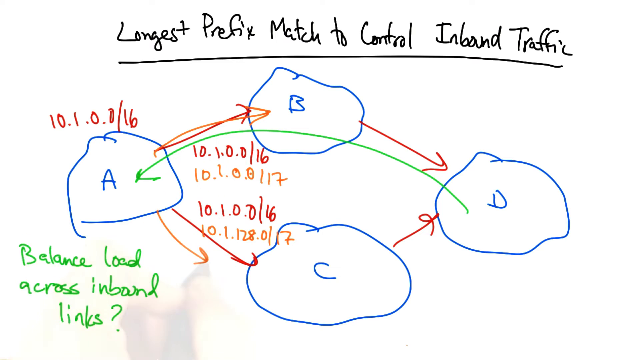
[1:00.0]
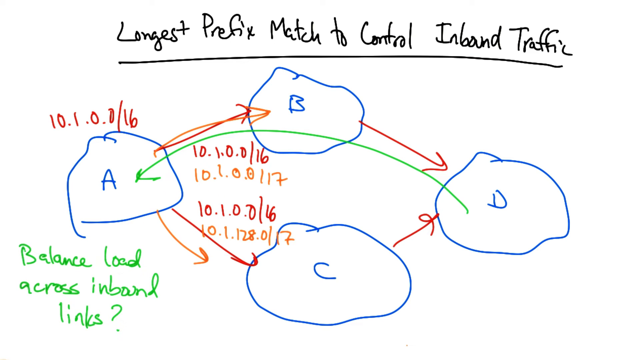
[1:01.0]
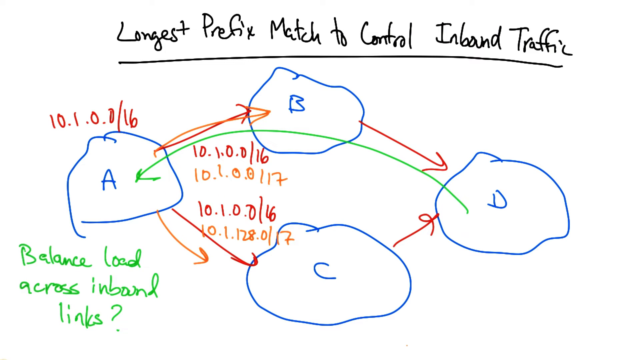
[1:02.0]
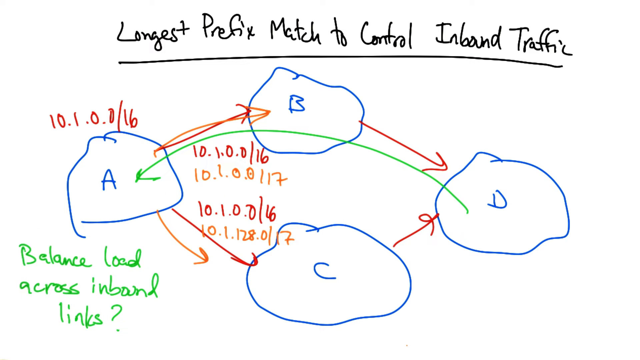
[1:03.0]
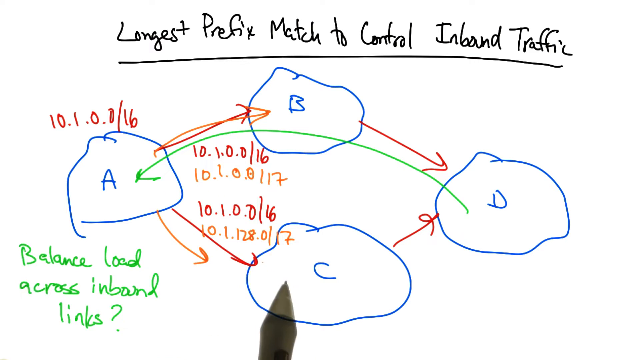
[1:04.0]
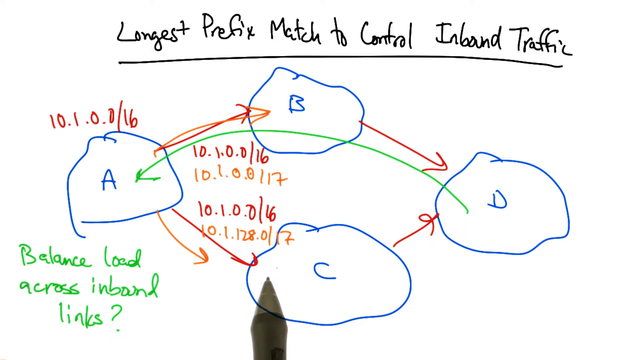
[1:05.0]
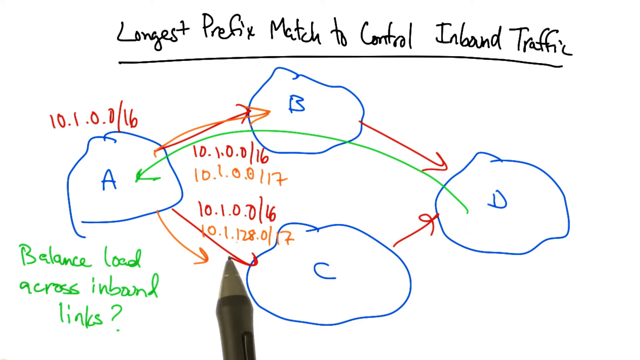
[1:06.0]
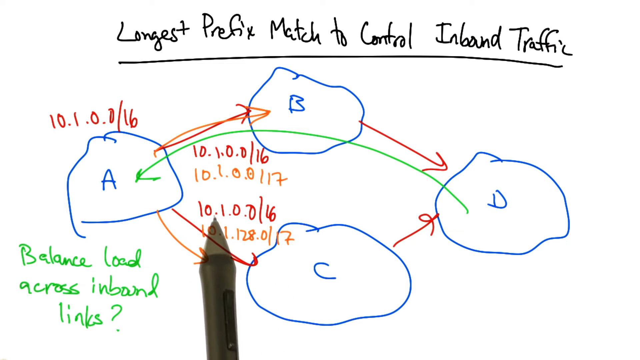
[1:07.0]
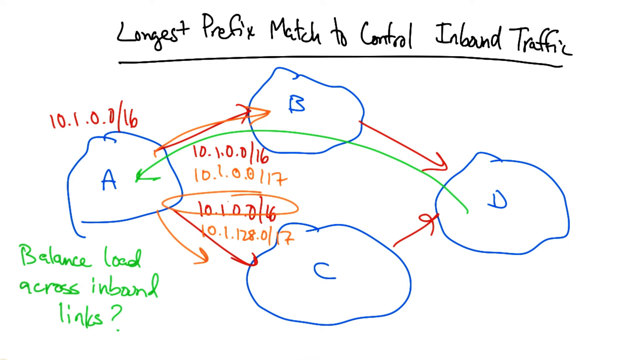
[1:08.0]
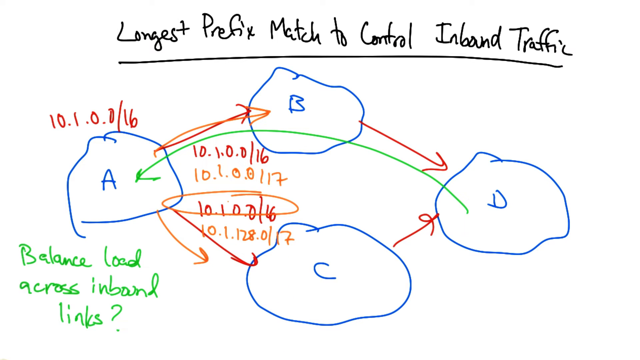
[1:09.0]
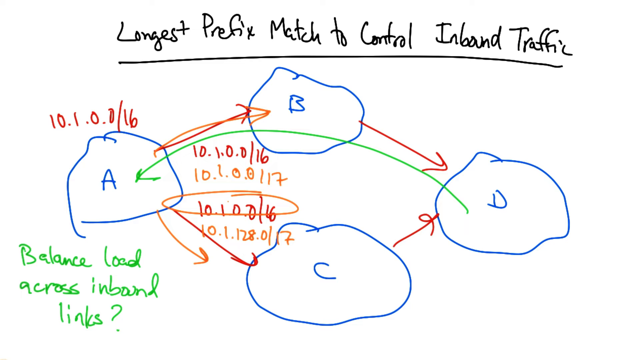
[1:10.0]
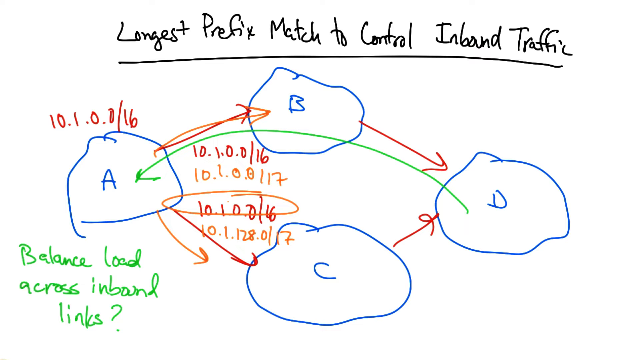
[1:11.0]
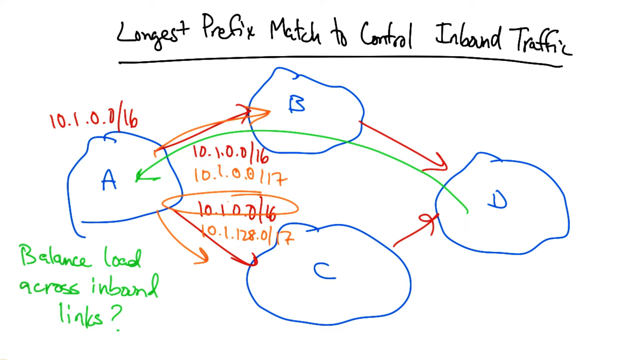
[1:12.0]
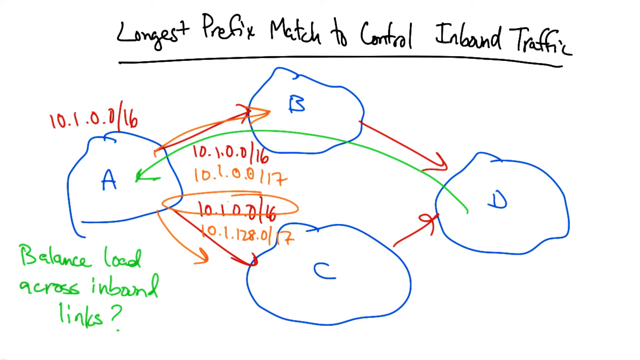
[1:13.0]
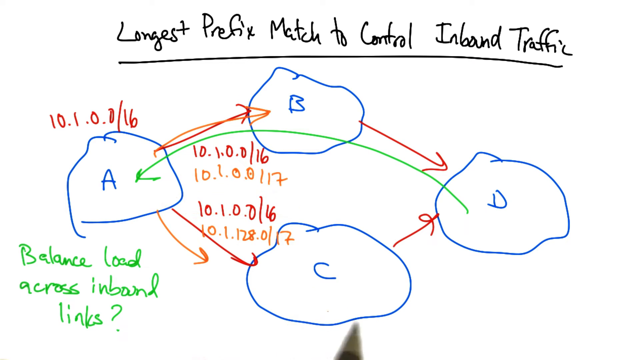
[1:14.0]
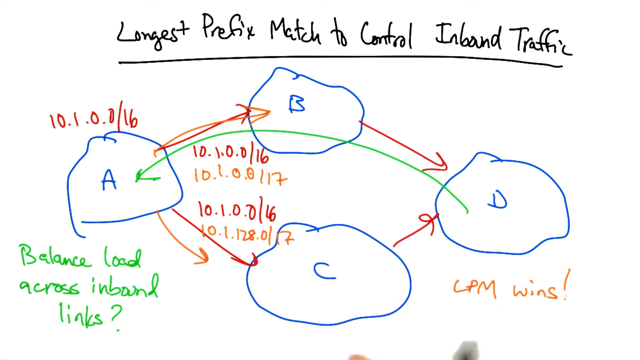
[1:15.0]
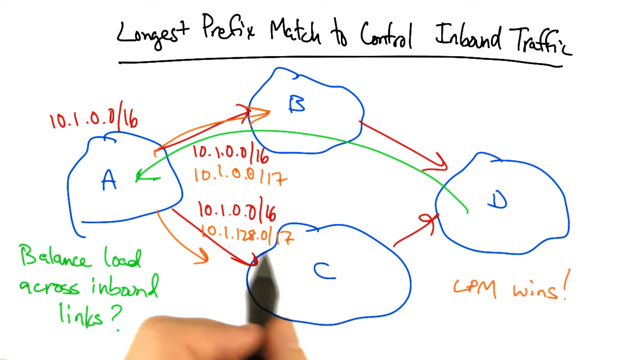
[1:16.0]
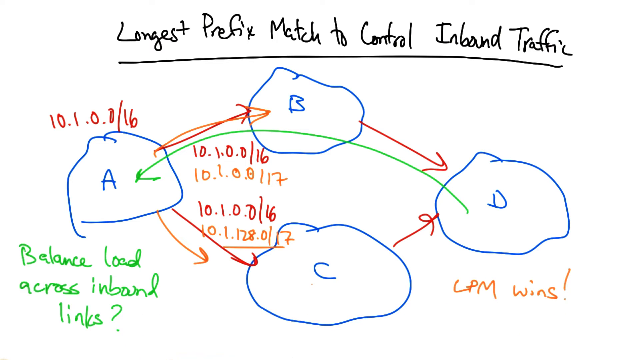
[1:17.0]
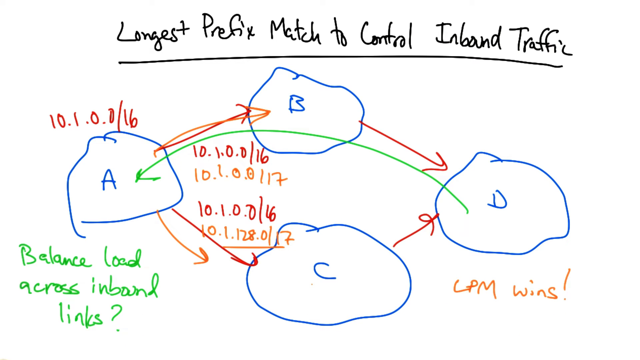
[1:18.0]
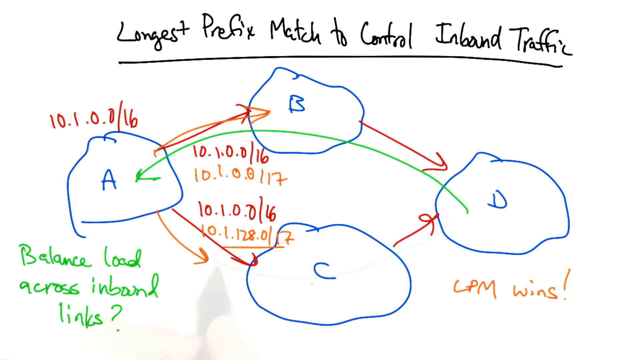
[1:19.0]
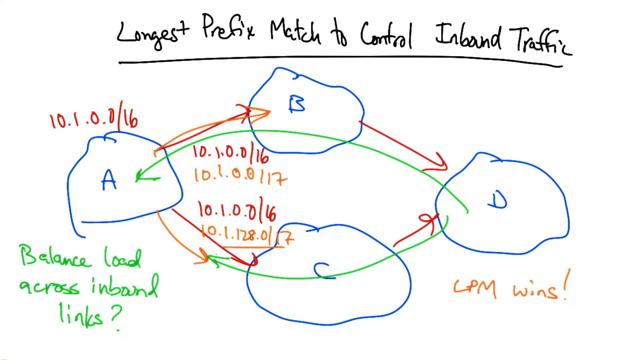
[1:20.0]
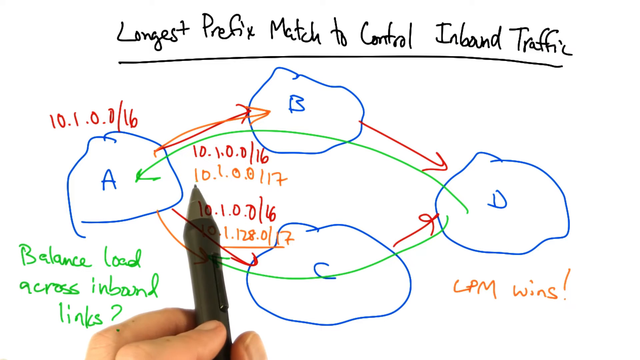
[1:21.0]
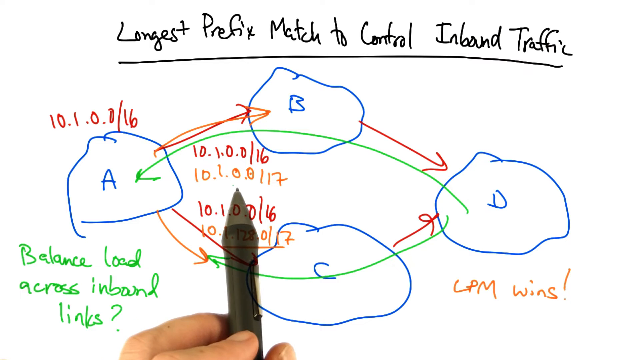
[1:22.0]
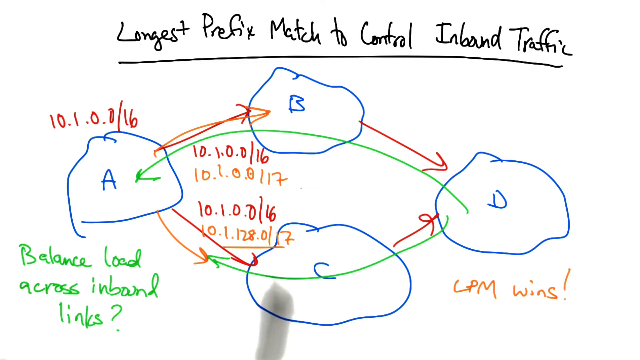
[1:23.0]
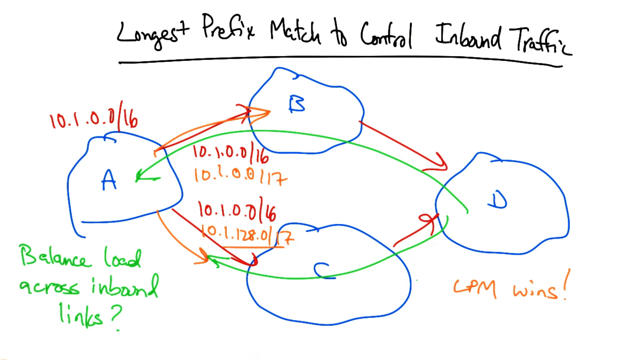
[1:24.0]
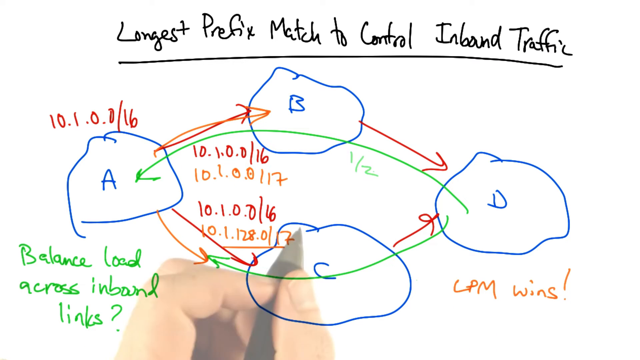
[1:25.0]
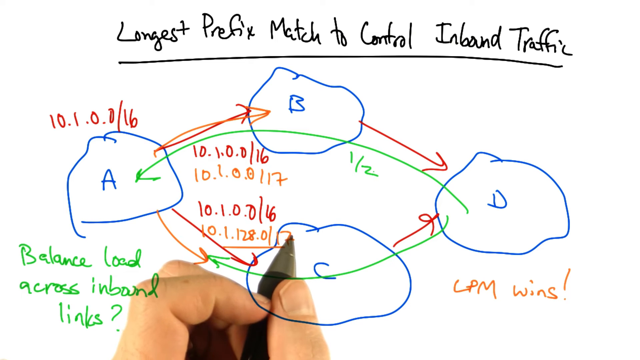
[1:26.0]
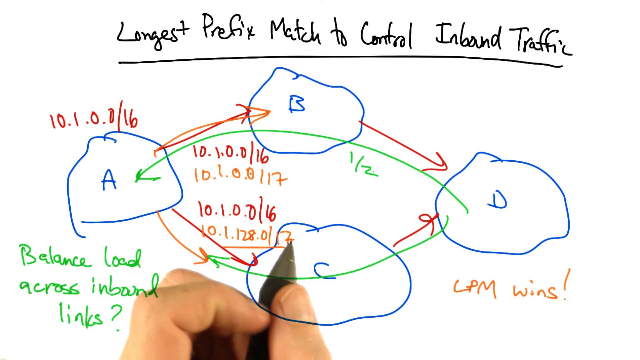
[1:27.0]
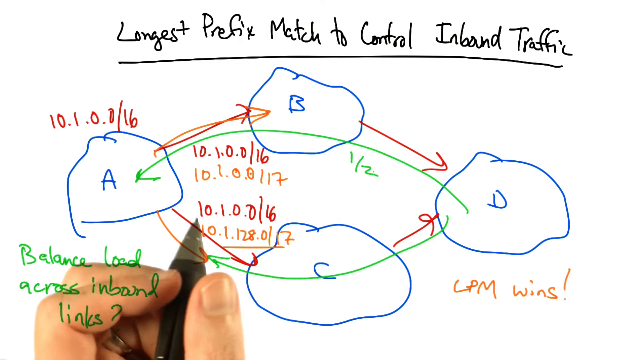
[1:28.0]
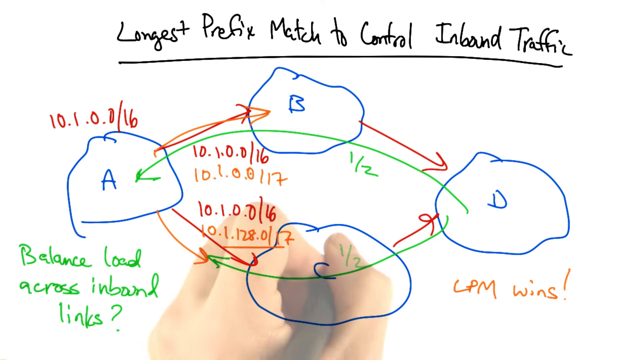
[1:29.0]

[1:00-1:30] The pen points at C and moves away. The red numbers between C and A, "10.1.0.0/16," get an orange circle drawn around them. The pen moves to C, then writes "LPM wins" in orange under D. It returns to C and underlines the orange number between C and A, "10.1.128.0/17." A green arrow is drawn from D across C over to the arrow pointing from A to C. The pen then points at the orange number between A and B. Underneath B on the right side, "1/2" is written in green, and "1/2" is also written in green on C. Across the top, the black cursive title "longest prefix match to control inbound traffic" remains, underlined with a black line.